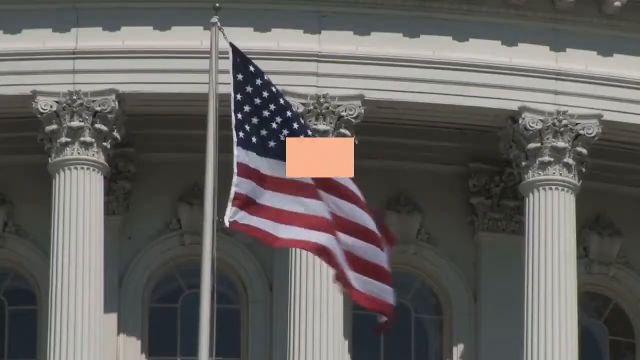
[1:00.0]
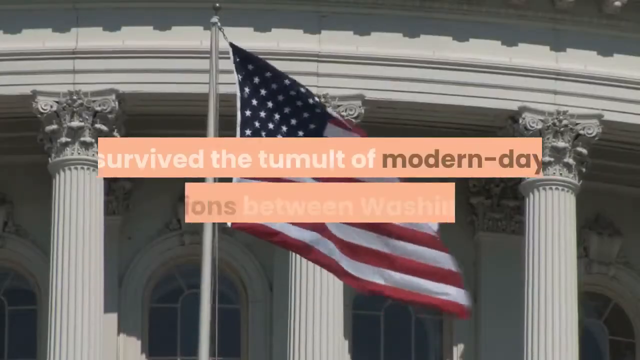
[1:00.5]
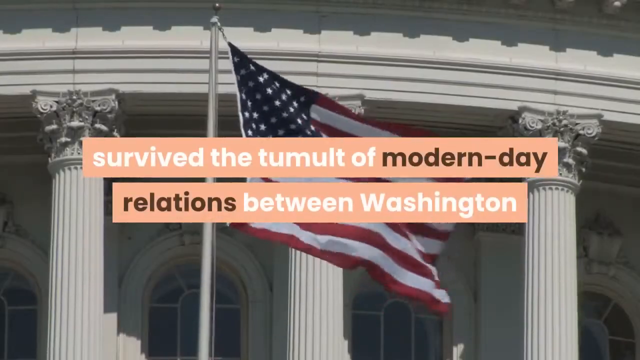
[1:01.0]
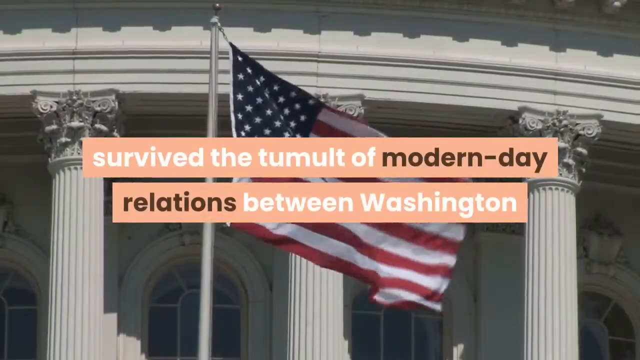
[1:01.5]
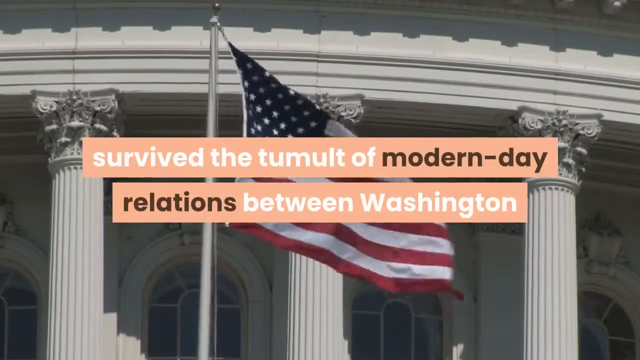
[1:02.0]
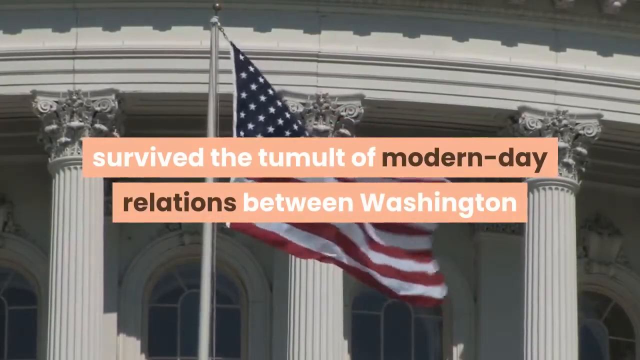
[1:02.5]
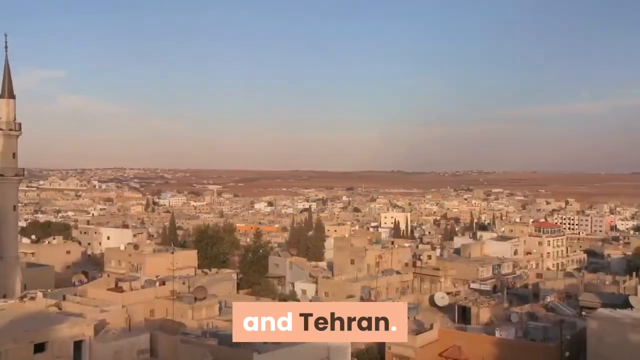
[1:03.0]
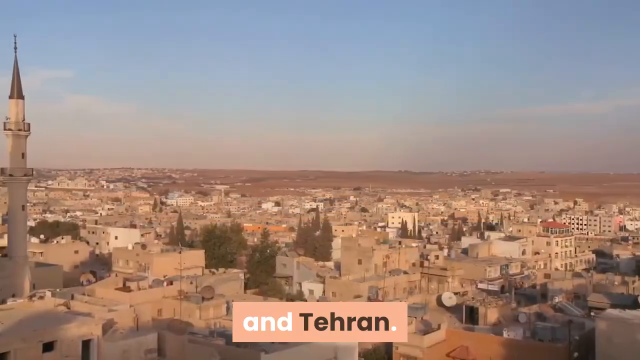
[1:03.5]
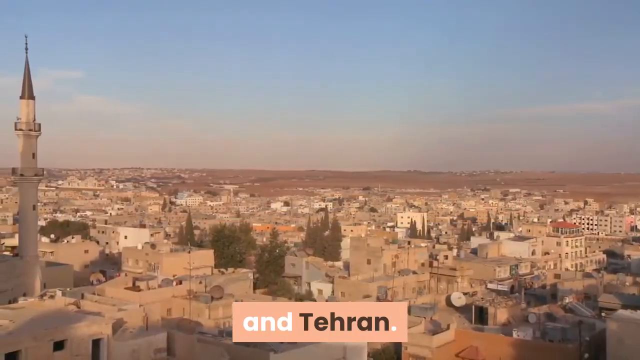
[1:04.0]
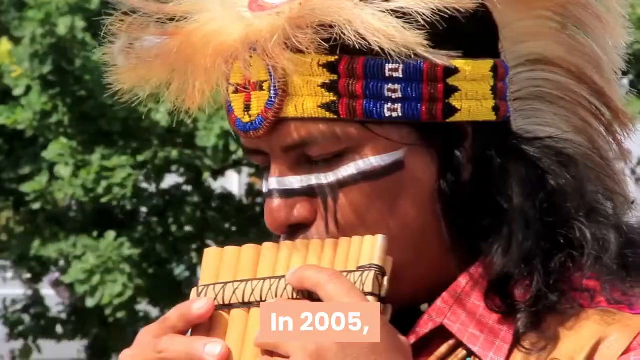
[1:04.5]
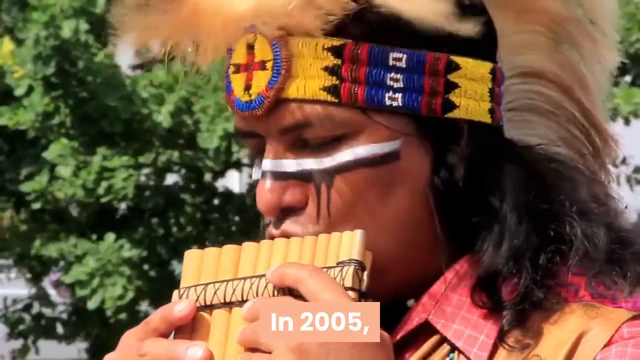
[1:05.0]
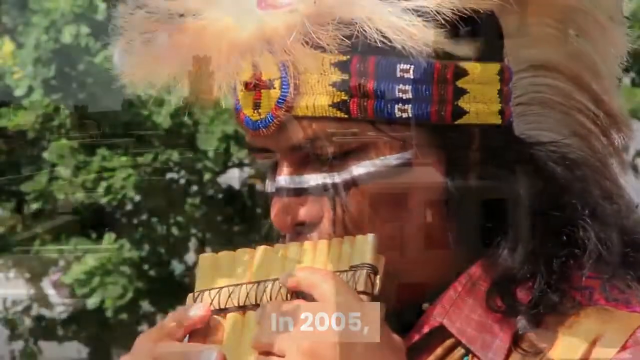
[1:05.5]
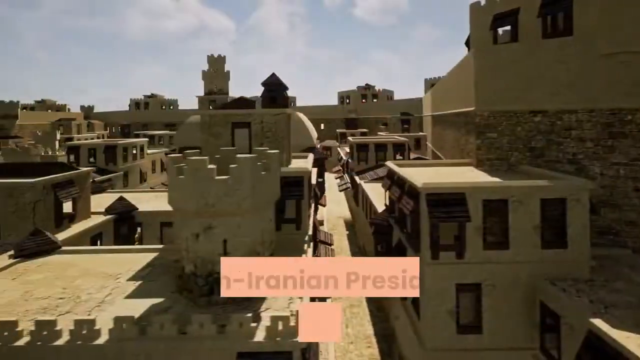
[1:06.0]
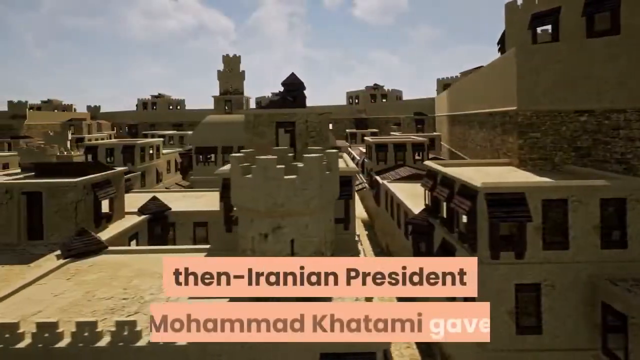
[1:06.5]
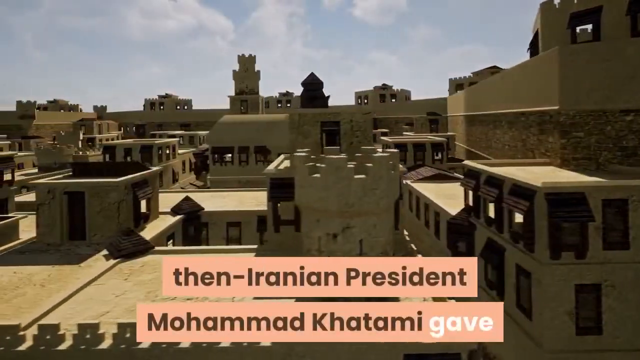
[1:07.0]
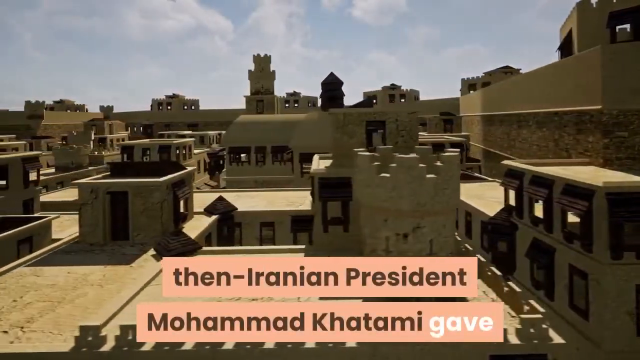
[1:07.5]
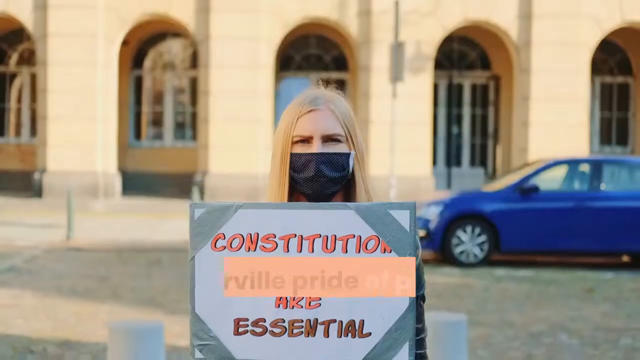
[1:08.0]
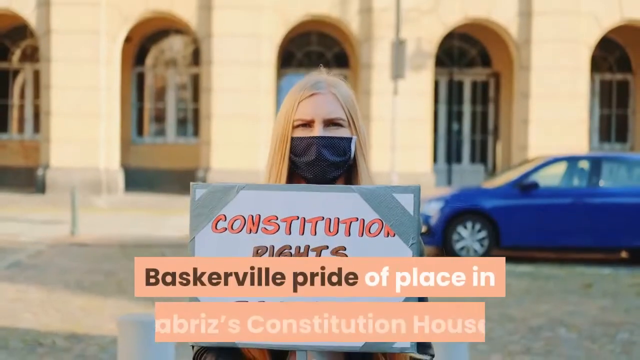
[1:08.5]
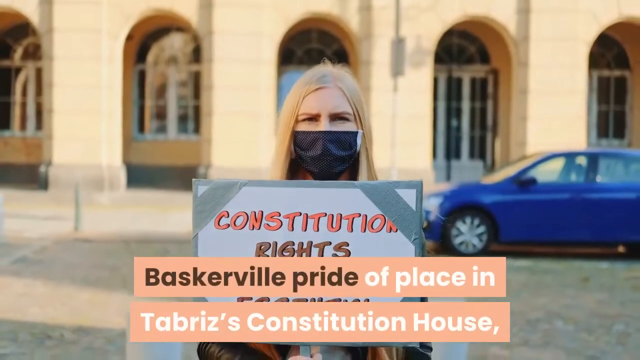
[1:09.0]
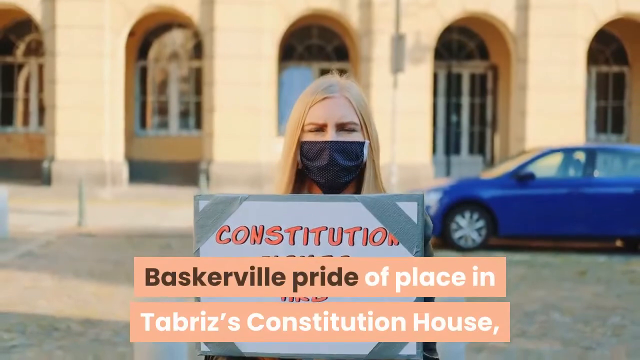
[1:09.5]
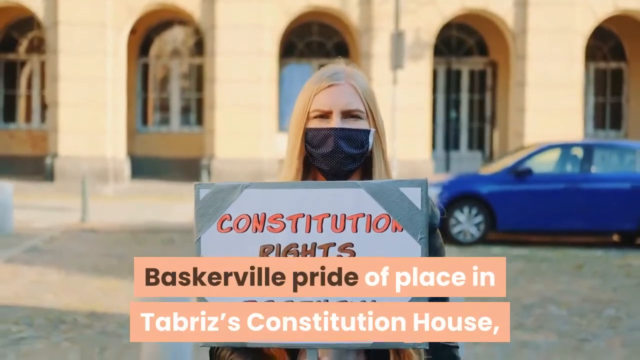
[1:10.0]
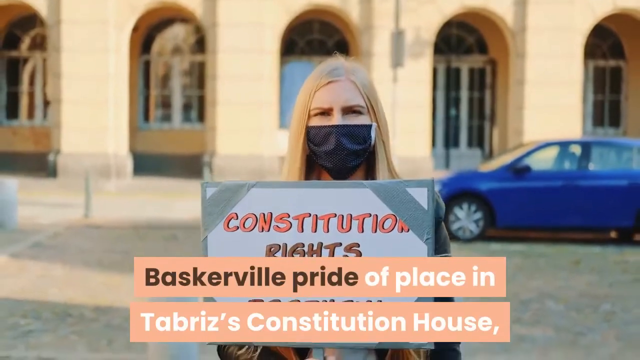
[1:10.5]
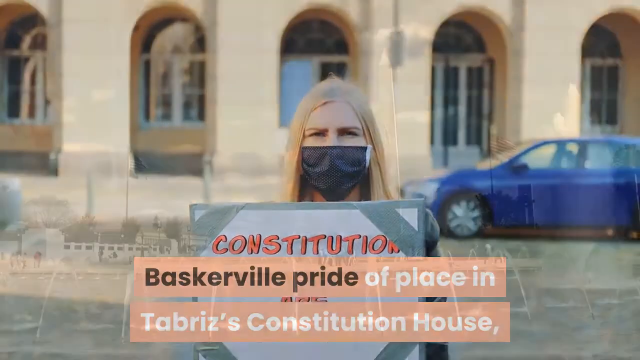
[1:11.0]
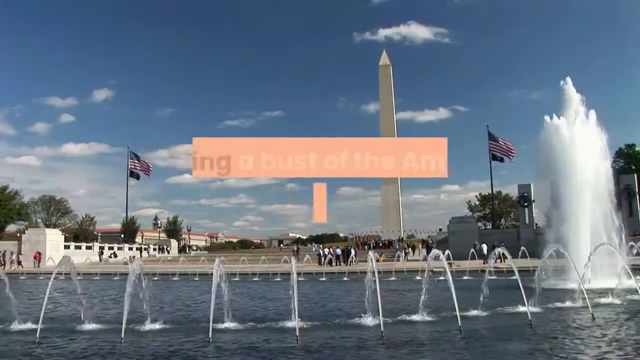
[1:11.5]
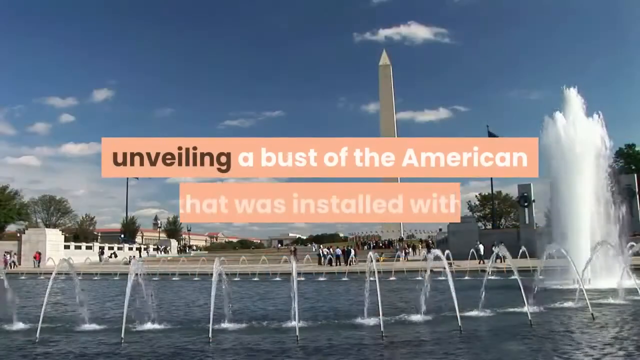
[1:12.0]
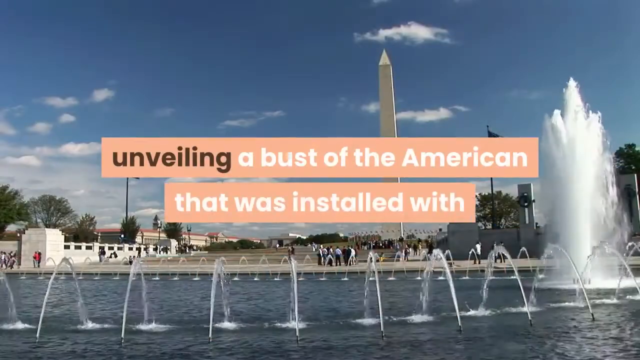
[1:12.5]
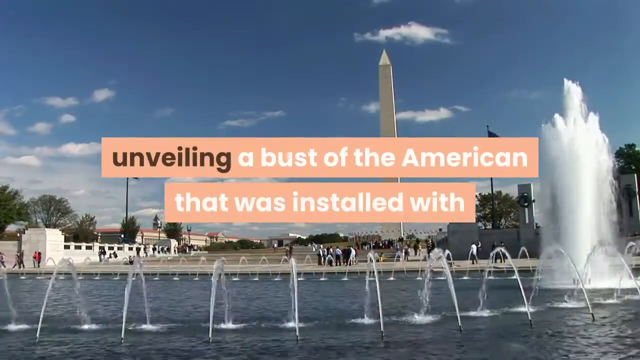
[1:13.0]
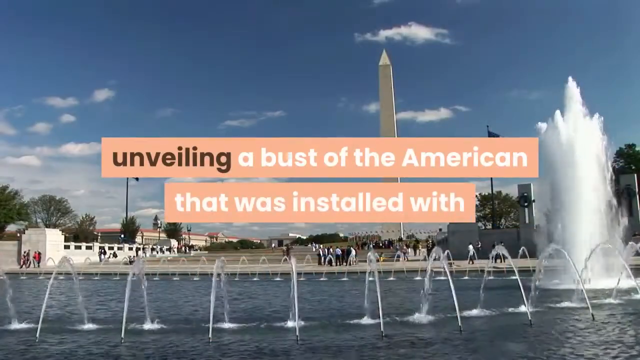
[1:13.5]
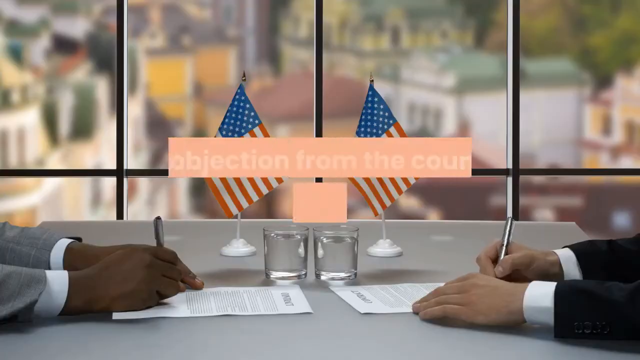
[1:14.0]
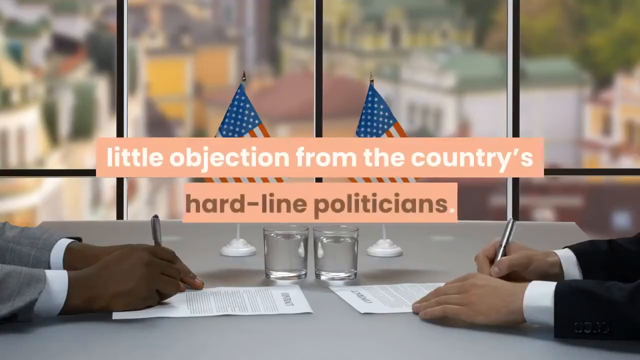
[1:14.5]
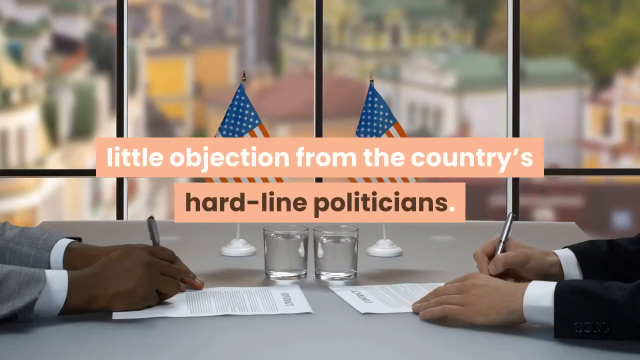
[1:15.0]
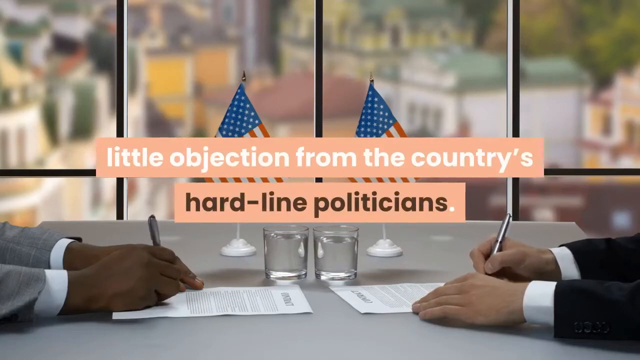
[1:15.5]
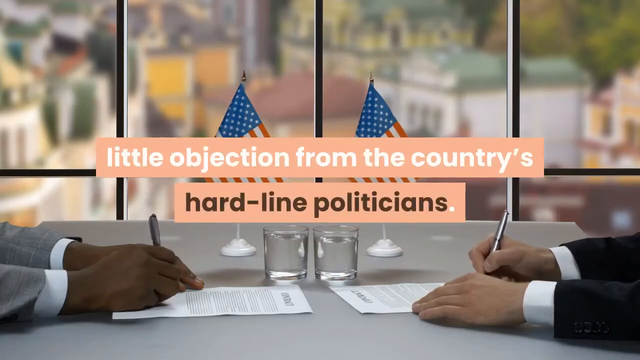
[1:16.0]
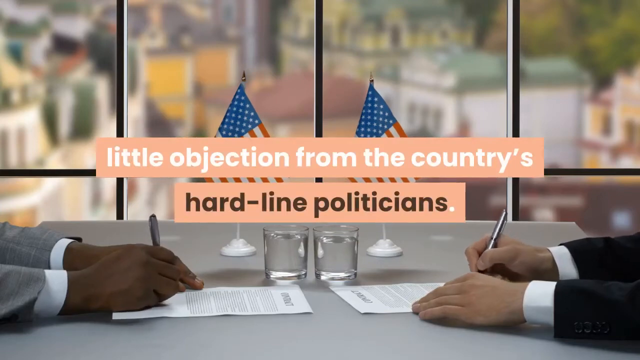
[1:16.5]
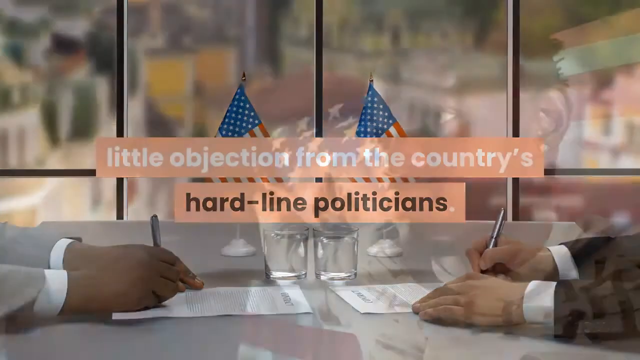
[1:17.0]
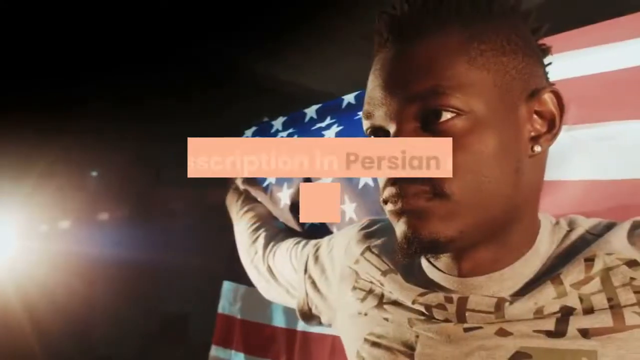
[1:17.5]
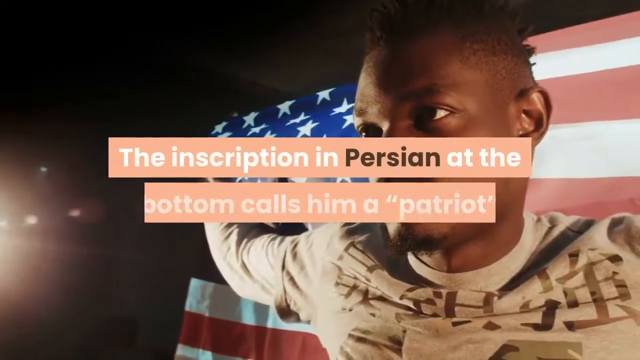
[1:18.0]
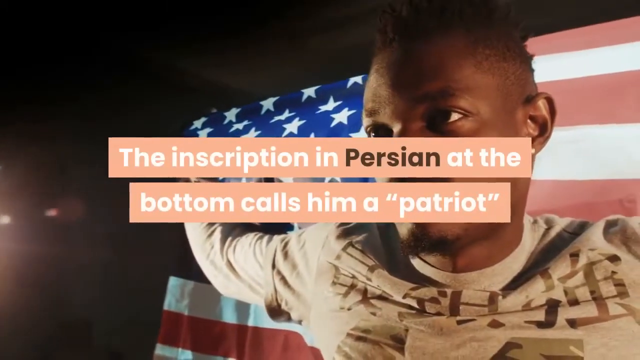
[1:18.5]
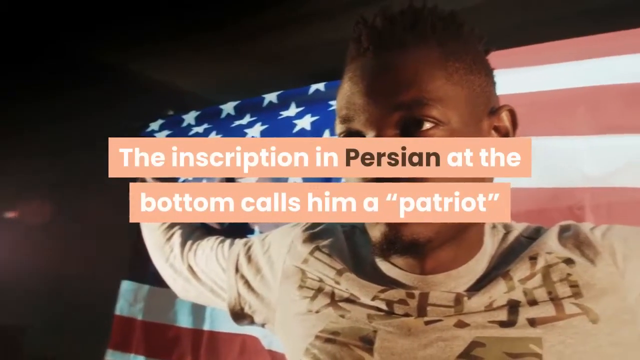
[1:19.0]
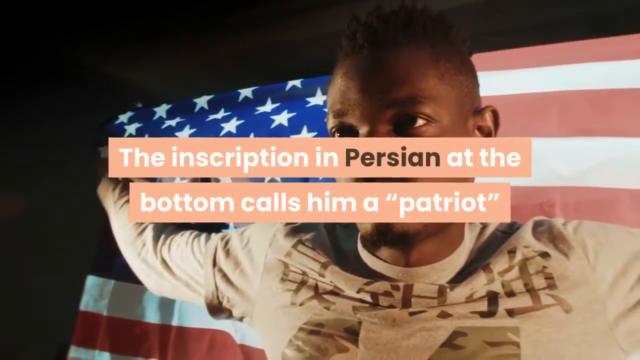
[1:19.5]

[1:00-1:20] The American flag waves in front of the Capitol, then the scene changes to an aerial view of Iran, and then to a Native American wearing paint and a traditional feather headband, blowing on some kind of piped instrument. Another, much closer aerial view of an Iranian city skims across the tops of buildings. A white woman with blonde hair stands in the street wearing a black mask and holding up a sign that says "constitutional rights"; it is unclear whether she is in Iran or the United States. She walks toward the camera. Next is the Washington Monument with the water and fountain in front of it in the foreground. Two men sit across from each other signing a paper, with two American flags beside them; only their hands and arms are visible. An African American man holds his arms spread out to the sides, stretching an American flag behind him and holding it up behind his head. A quick flash shows a man dipping a fountain pen into an inkwell. The on-screen text says that the love of Howard Baskerville has survived the turmoil of modern relations between Washington and Tehran, that the Iranian president in 2005 had a statue erected in Baskerville's honor with little objection even from hardline Iranians, and that the caption under the statue reads "Patriot".